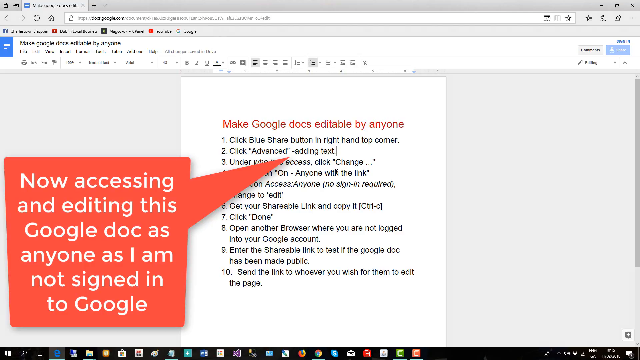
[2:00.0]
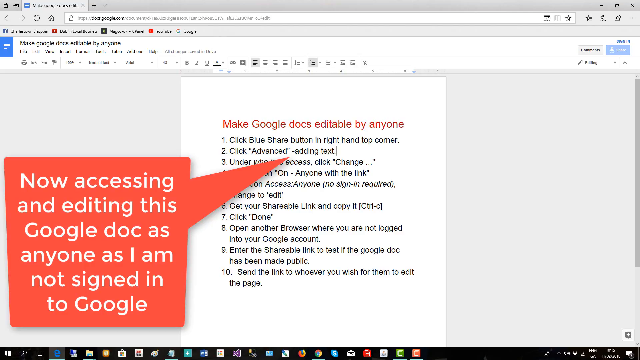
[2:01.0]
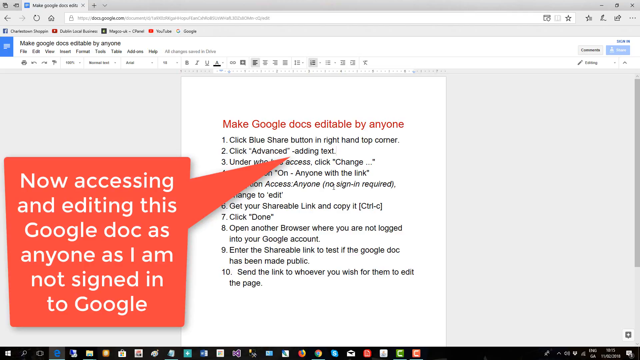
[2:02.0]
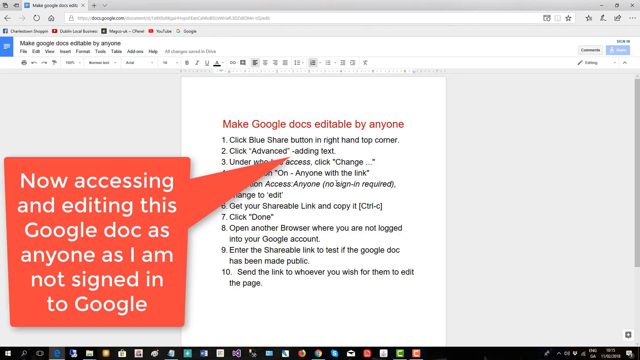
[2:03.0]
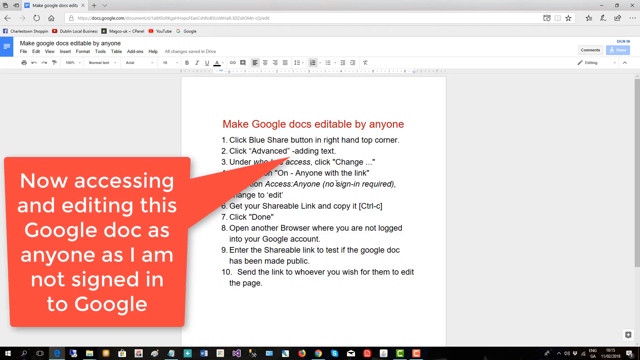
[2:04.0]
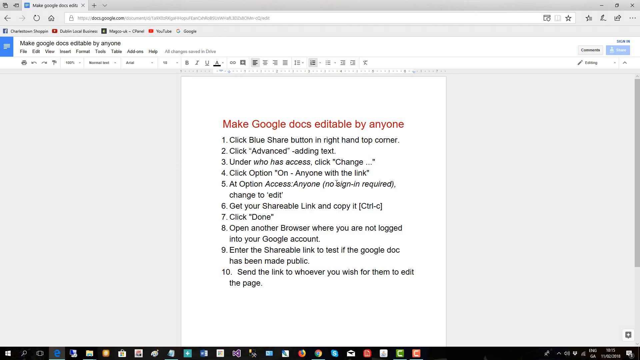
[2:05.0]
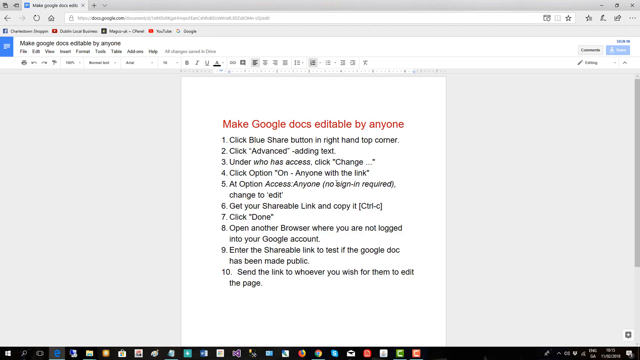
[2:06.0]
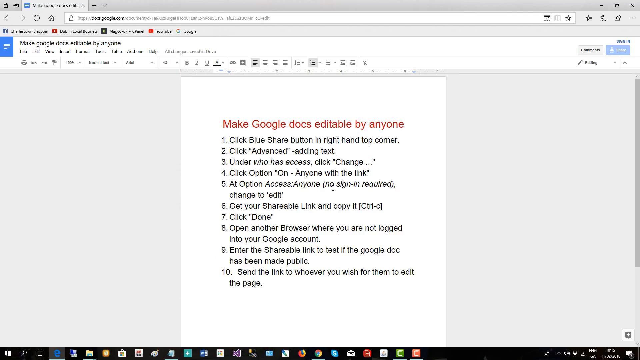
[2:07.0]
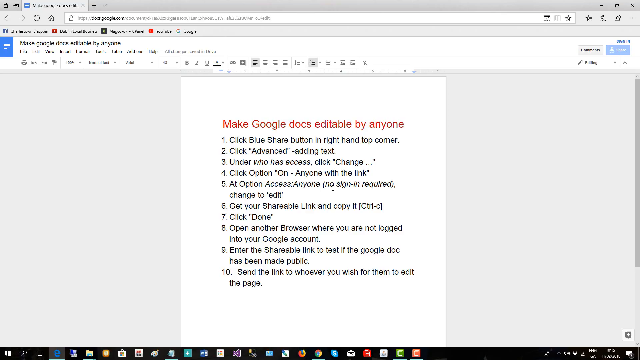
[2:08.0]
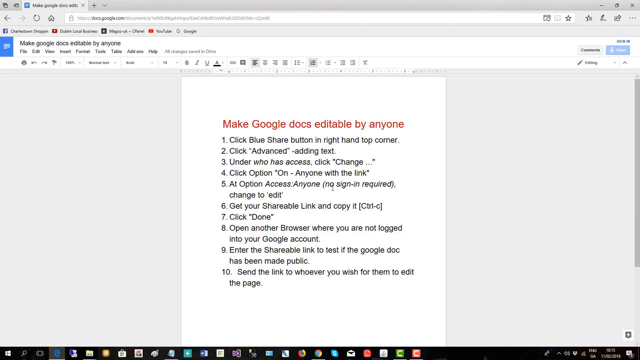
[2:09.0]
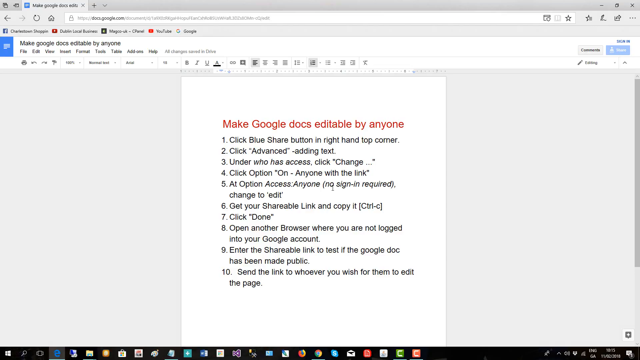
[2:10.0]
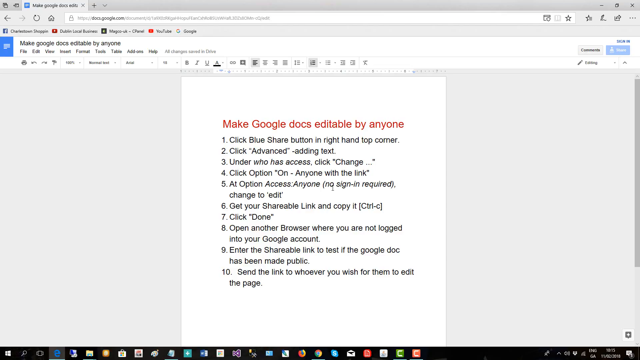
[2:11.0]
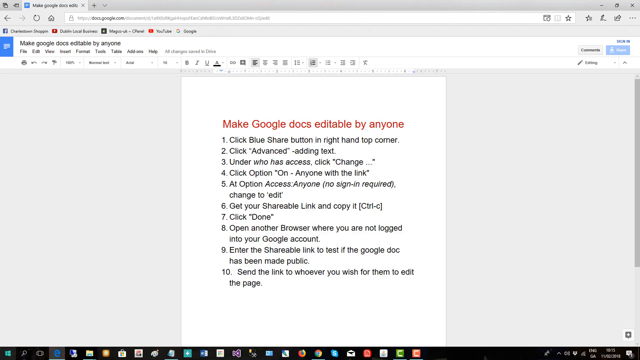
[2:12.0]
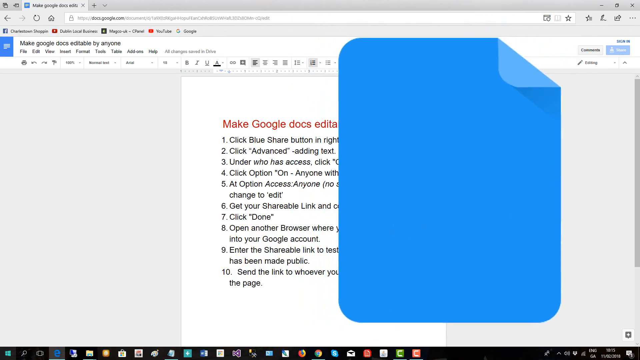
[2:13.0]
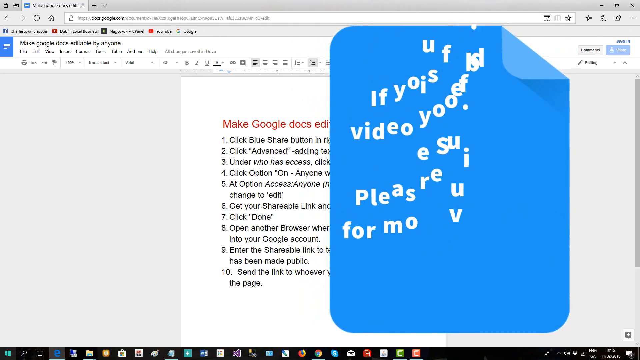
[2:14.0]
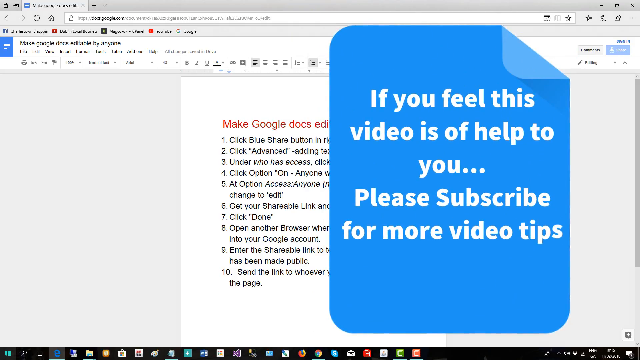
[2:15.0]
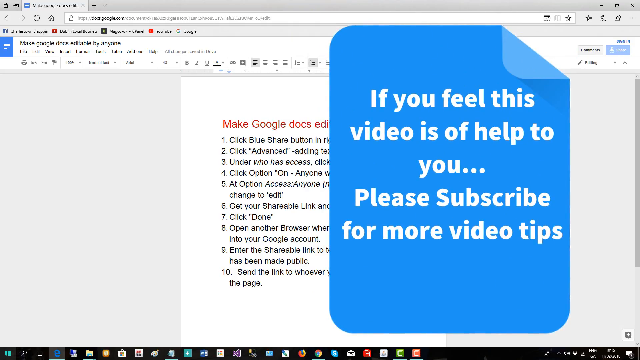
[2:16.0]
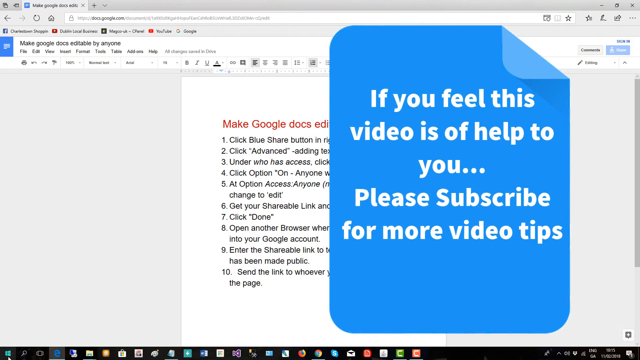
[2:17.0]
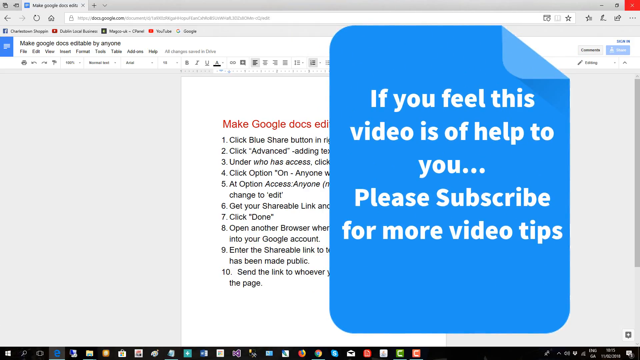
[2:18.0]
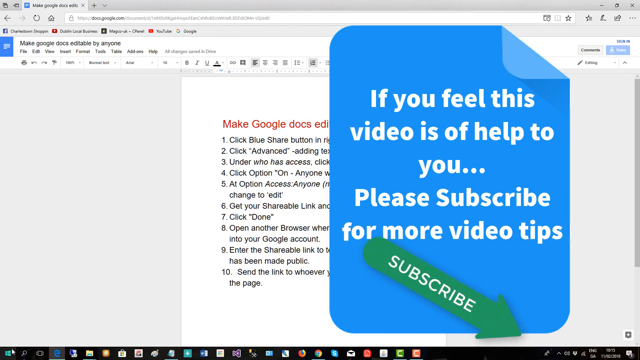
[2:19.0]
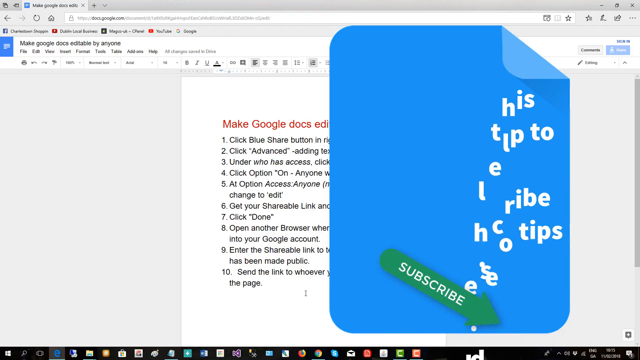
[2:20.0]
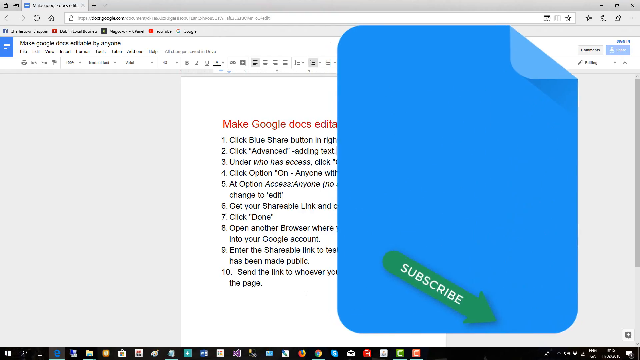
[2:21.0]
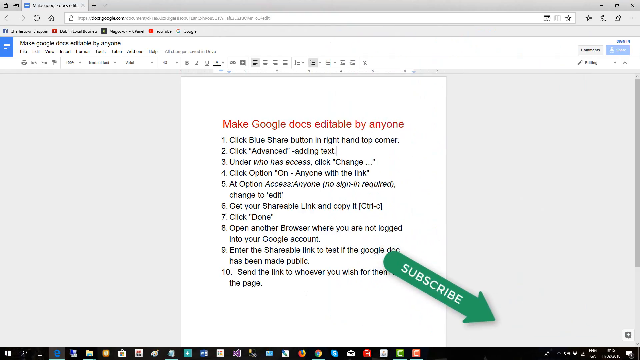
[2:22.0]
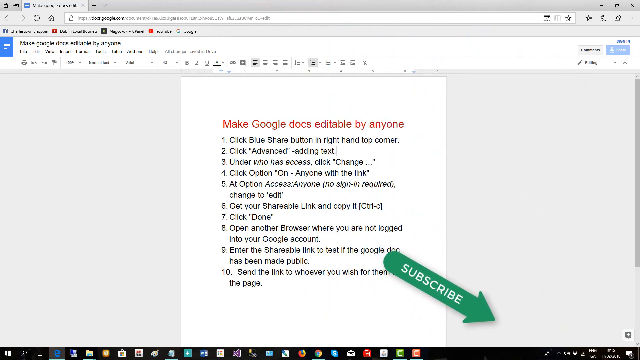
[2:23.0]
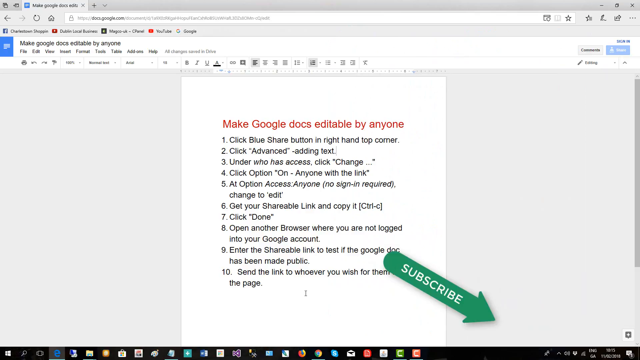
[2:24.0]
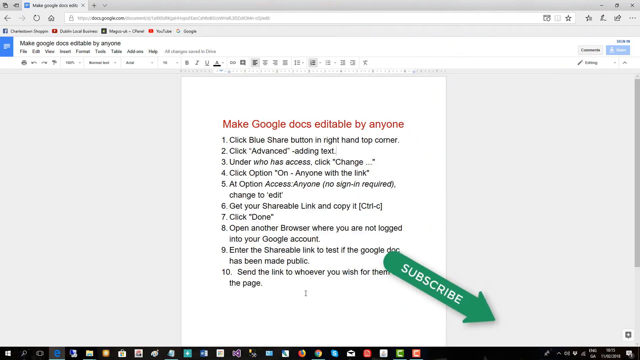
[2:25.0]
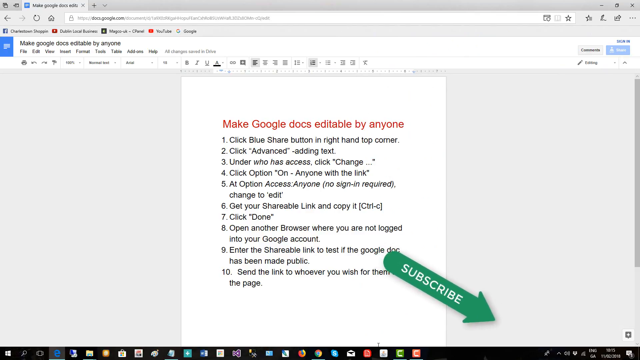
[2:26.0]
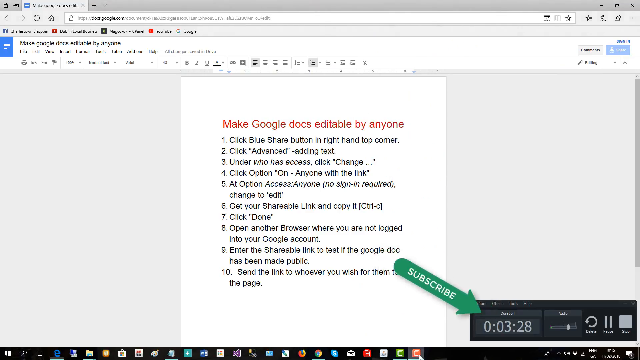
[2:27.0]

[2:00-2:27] A large red box on the screen reads "now accessing and editing this Google Doc as anyone as I am not signed in to Google," and the top corner shows "sign in." Next, a large blue square pops up over everything, reading "if you feel like this video has helped you, please subscribe for more video tips." It stays for a few seconds, then a big flashing green arrow labeled "subscribe" pops up pointing at the lower right corner, as all the arrows seem to fall off the blue page.